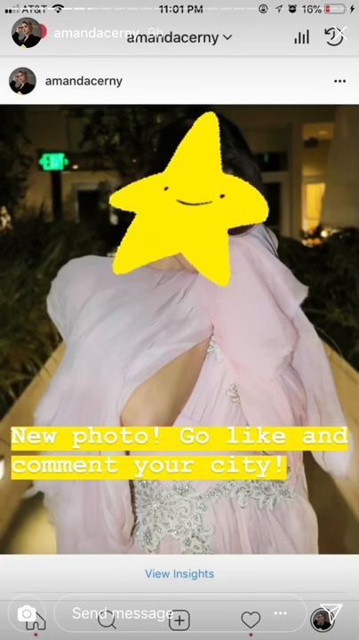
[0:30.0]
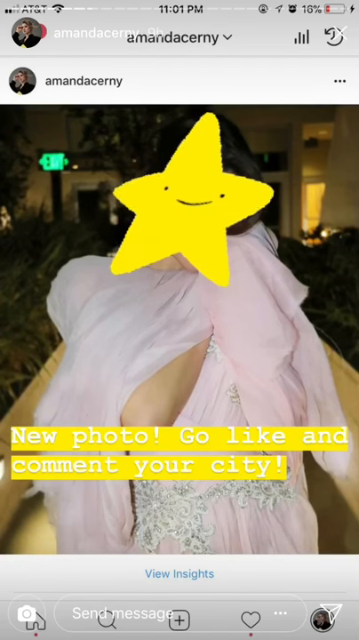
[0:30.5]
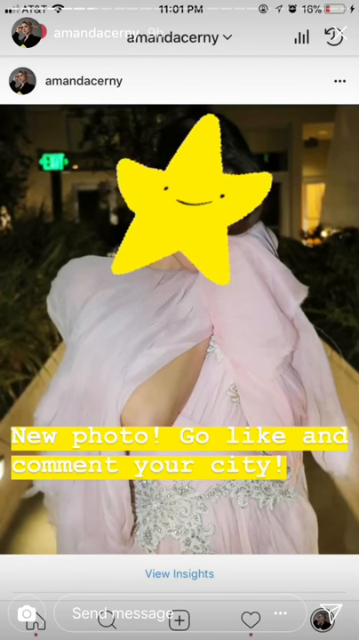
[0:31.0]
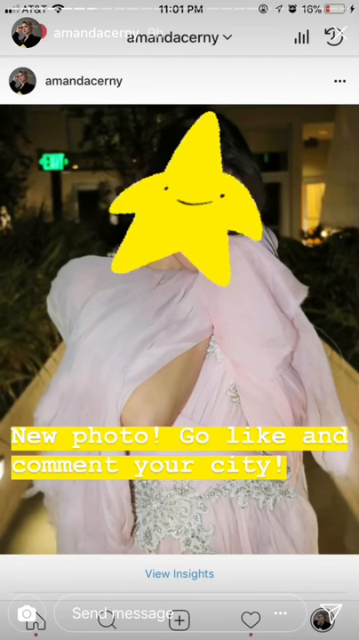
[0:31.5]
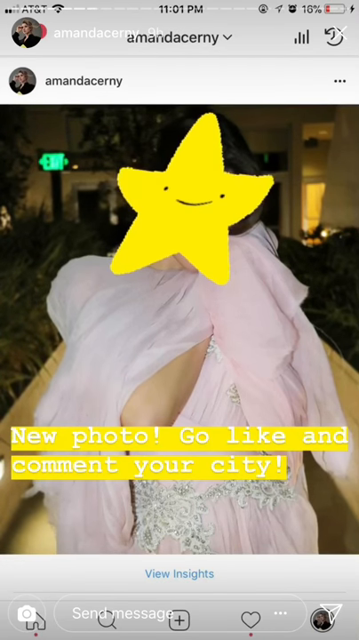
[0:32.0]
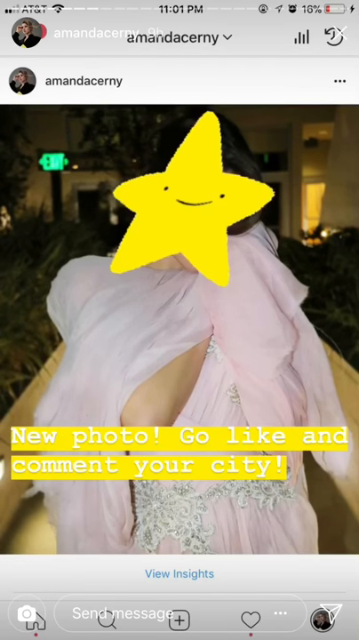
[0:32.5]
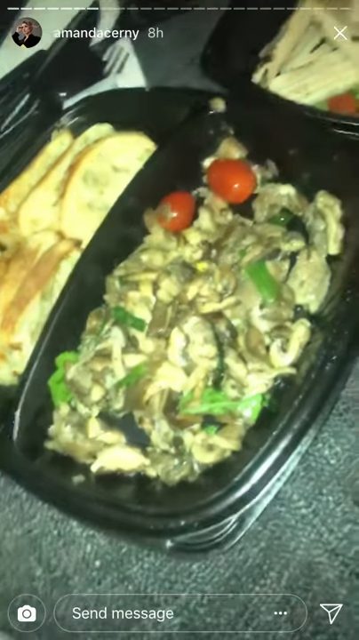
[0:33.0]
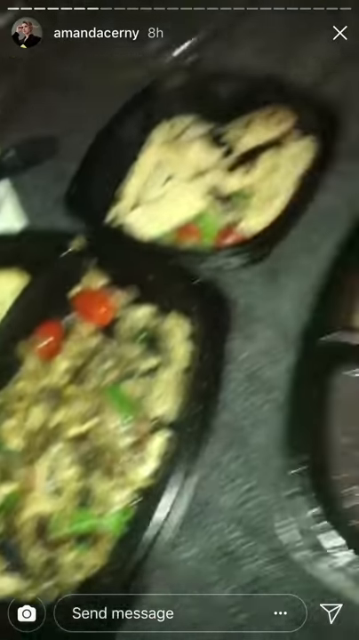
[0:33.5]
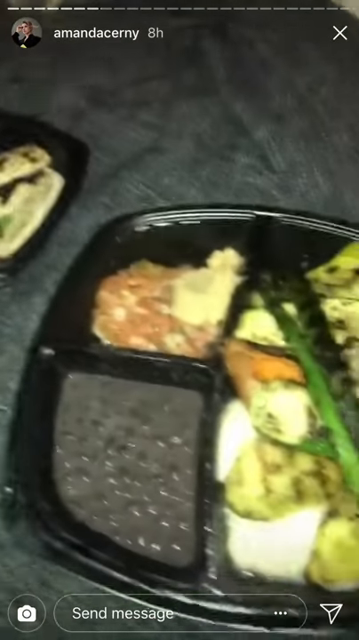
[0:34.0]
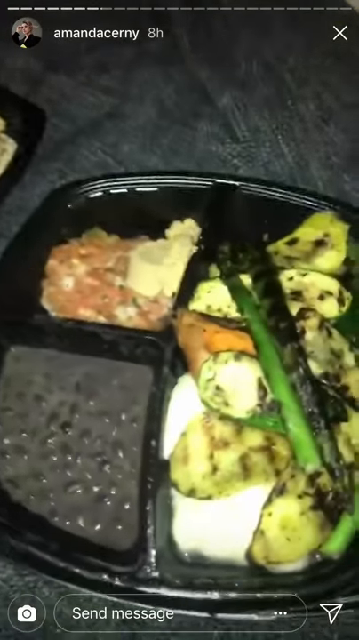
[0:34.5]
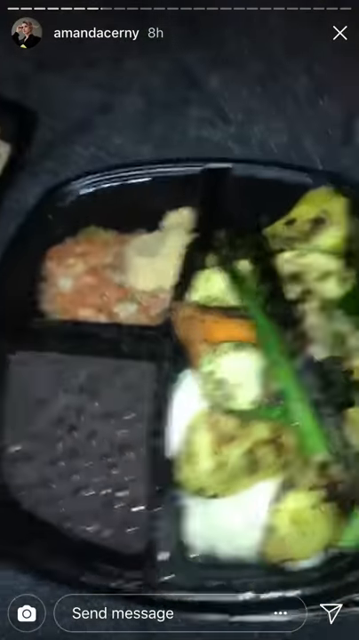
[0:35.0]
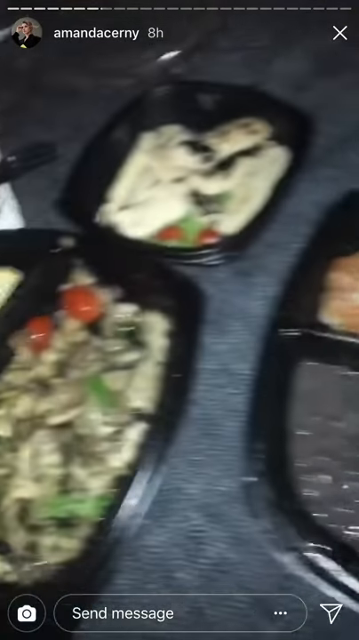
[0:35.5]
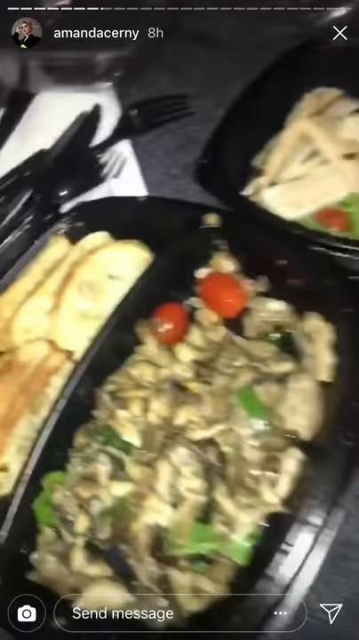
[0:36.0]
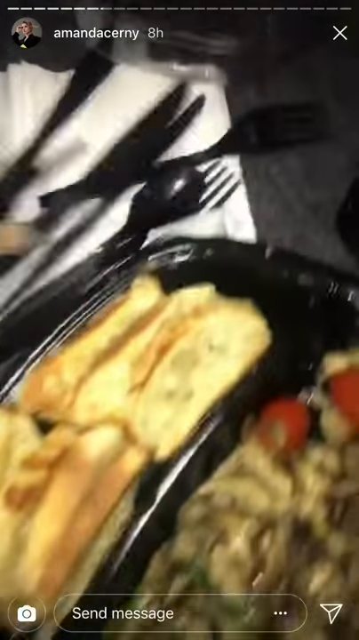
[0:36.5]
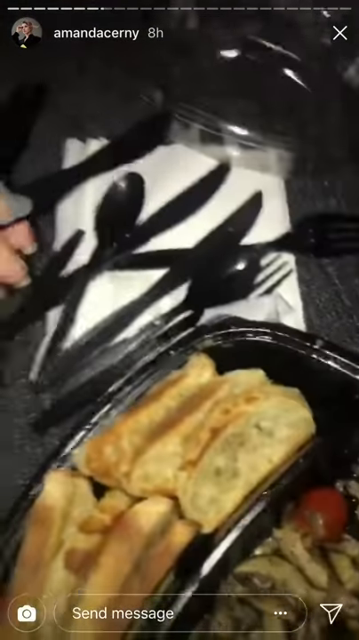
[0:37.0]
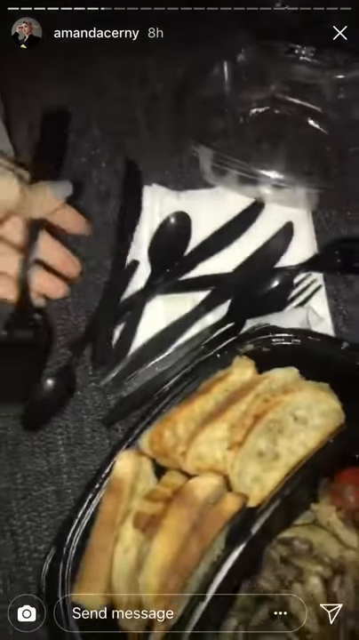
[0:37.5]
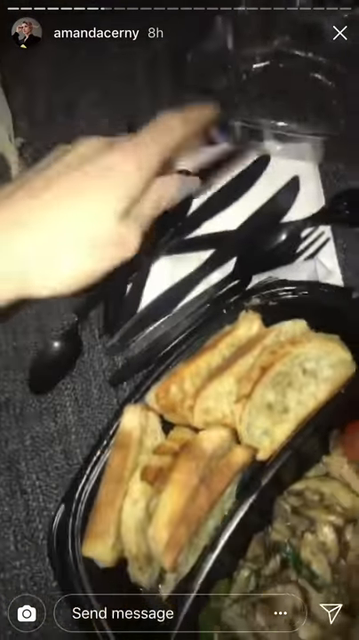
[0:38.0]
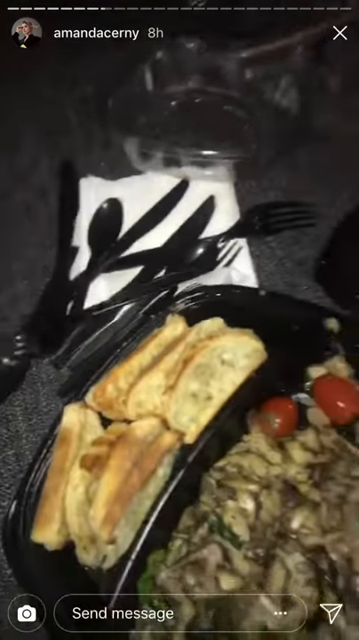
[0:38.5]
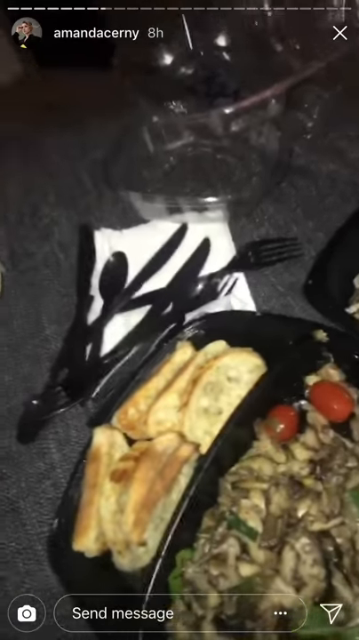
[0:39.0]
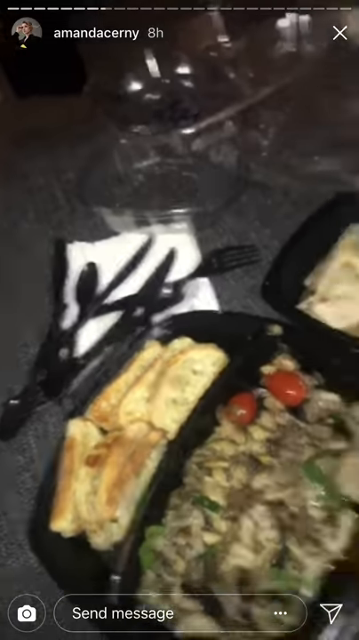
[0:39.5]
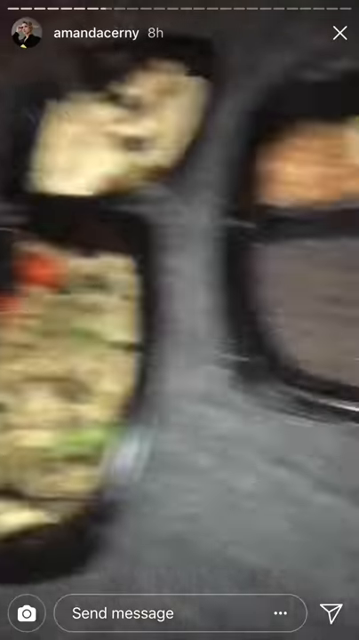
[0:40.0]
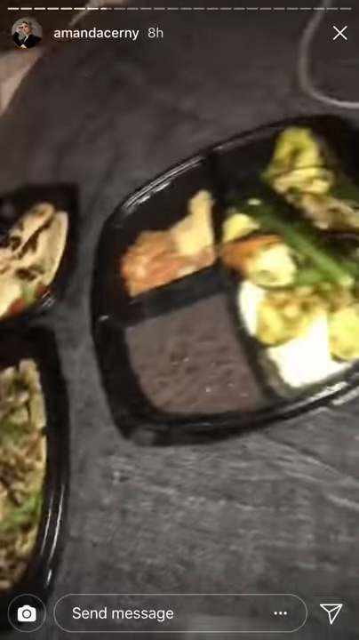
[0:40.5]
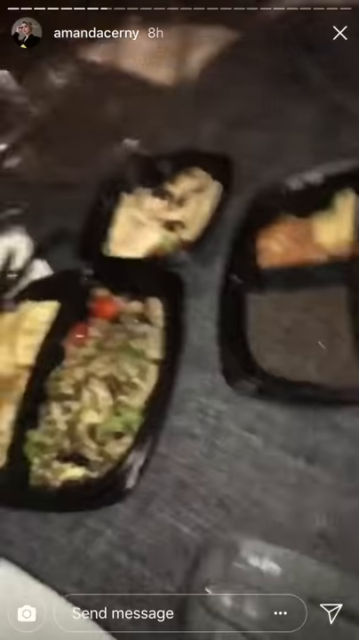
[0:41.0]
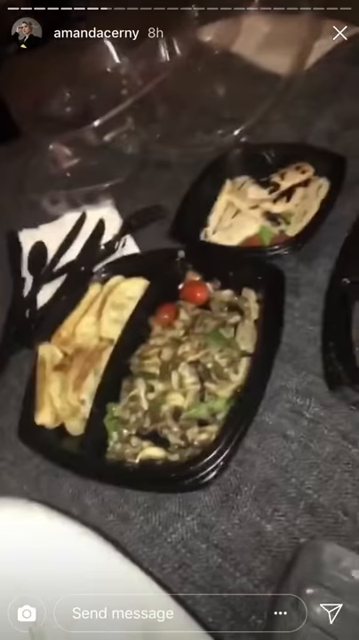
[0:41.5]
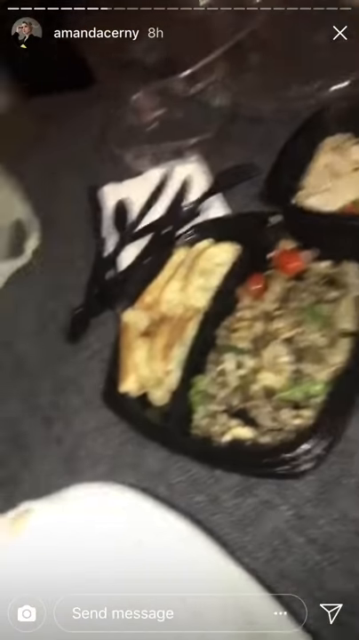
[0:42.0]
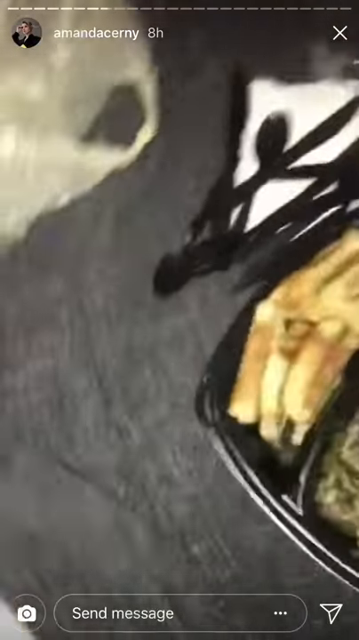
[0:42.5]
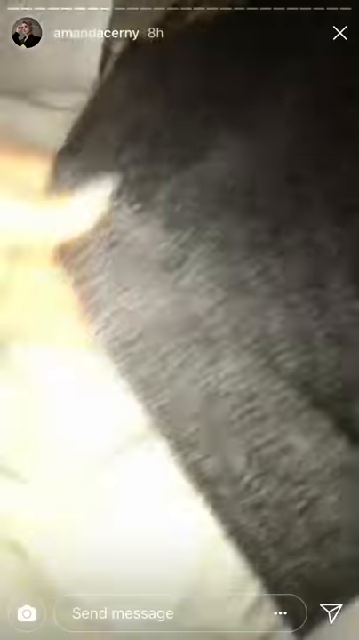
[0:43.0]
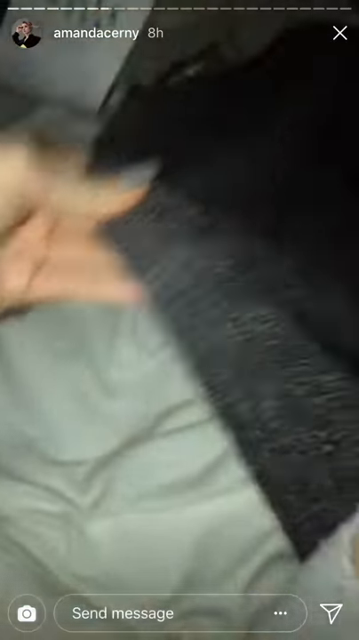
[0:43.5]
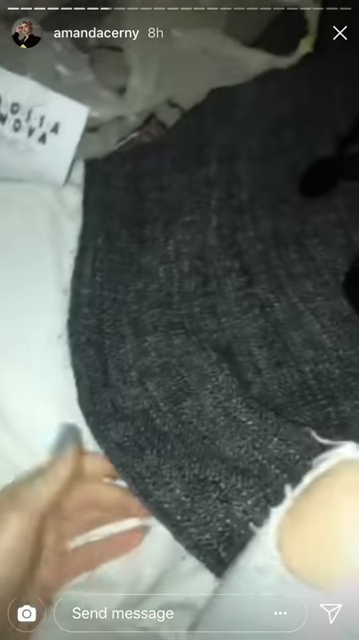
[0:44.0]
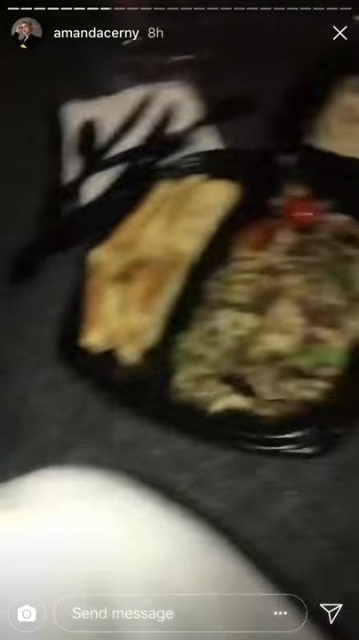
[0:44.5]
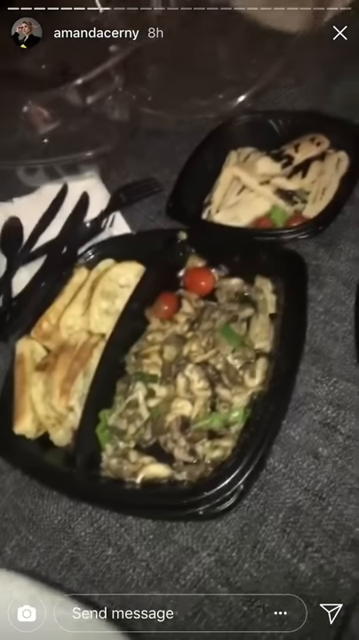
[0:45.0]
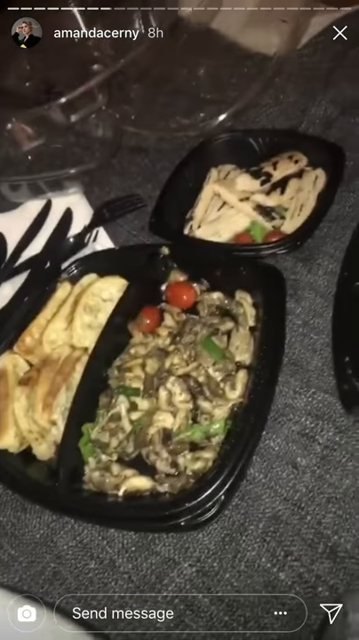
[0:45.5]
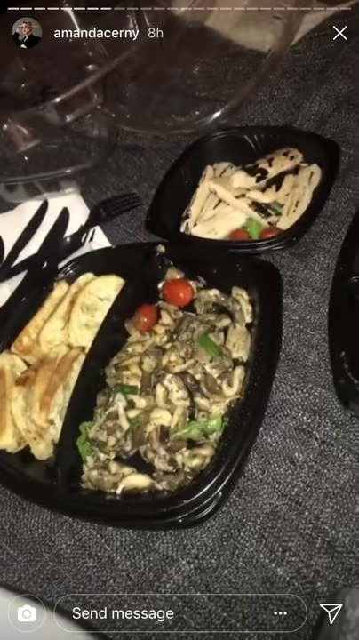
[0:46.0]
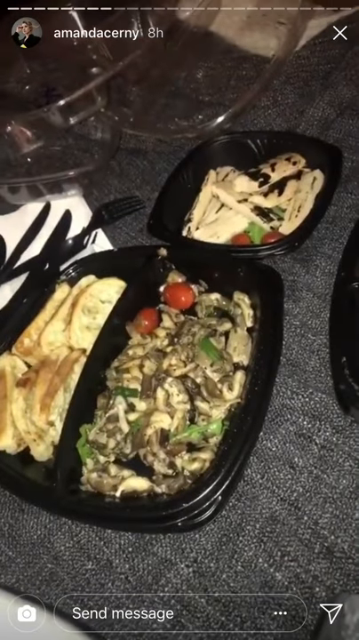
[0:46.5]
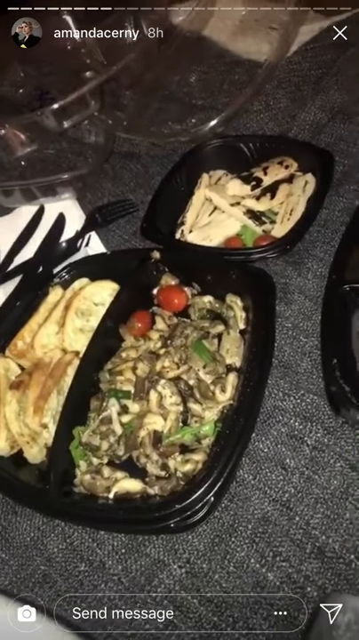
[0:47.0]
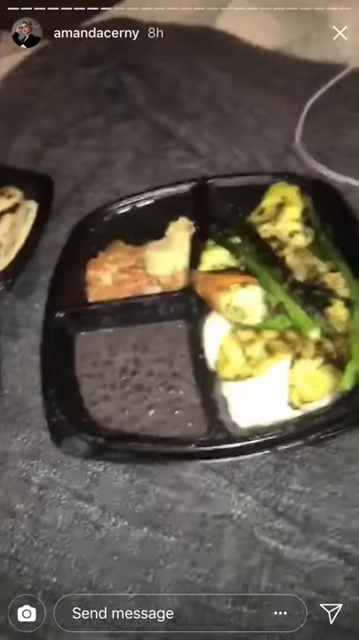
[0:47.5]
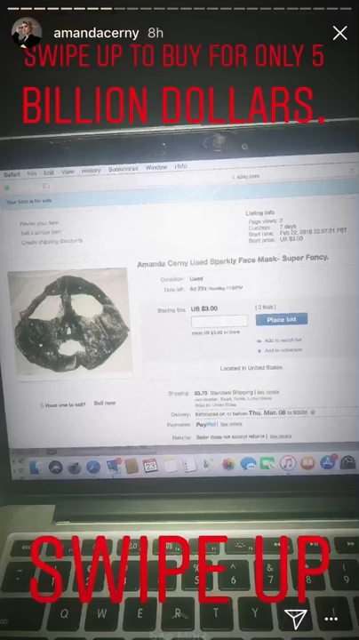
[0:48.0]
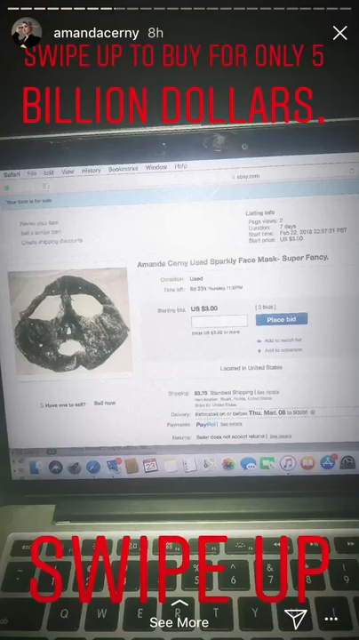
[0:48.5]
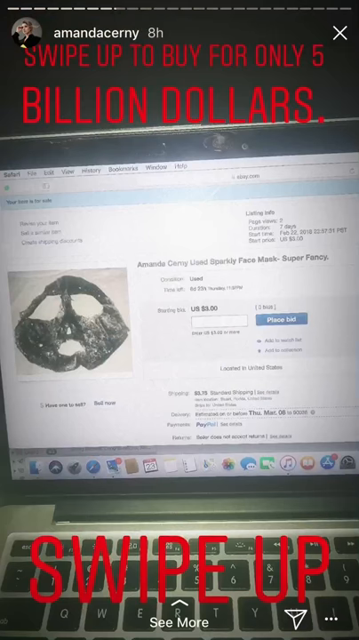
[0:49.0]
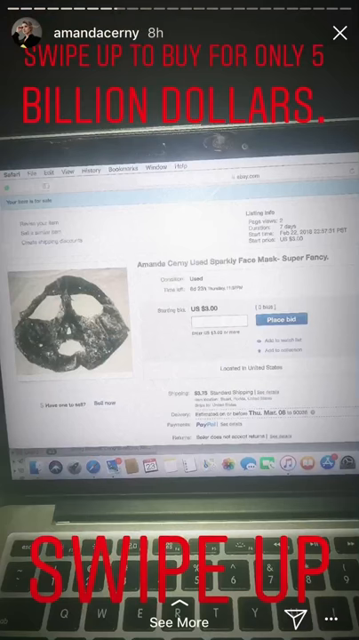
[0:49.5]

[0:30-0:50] An Instagram picture shows a woman in a purple dress whose face is covered by a yellow starfish emoji, with text at the bottom reading "new photo go like and comment your city". The video continues to plates of food, and the camera zooms in on each plate, showing vegetables, bean soup, roti and pasta. There is also a plate of sliced bread, plus black plastic spoons and forks. The video then moves to another Instagram story with red text reading "Swipe up to buy for only 5 billion dollars". Below the text is an open laptop whose screen shows a picture of a mask and some text that is hard to read because the picture is blurry. At the bottom, "swipe up" is written in red.